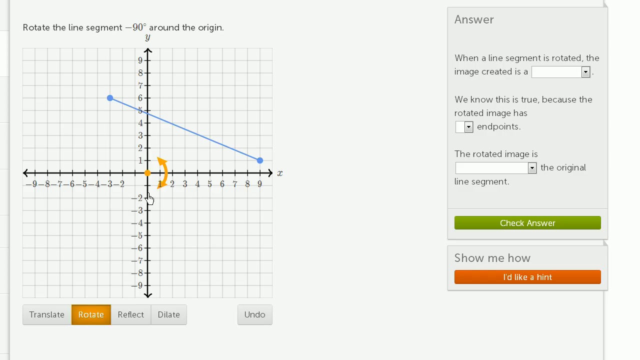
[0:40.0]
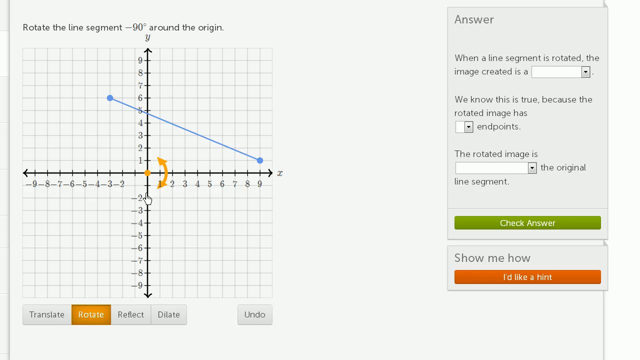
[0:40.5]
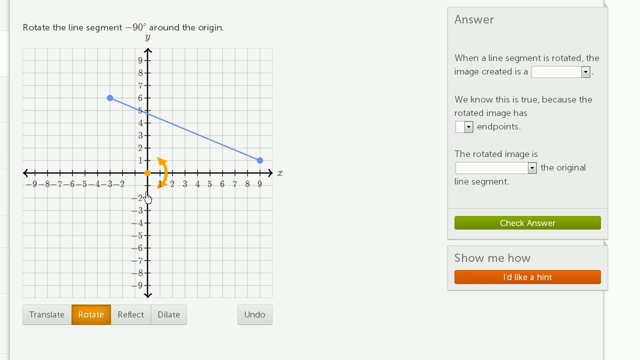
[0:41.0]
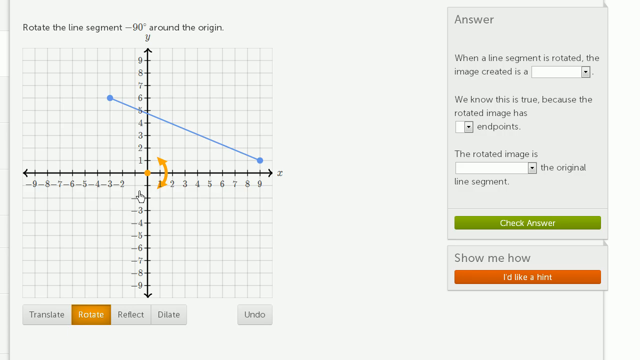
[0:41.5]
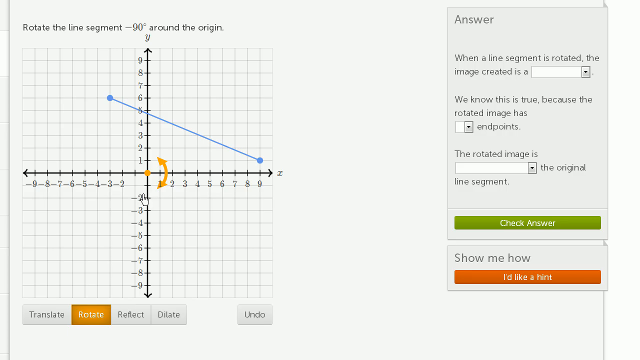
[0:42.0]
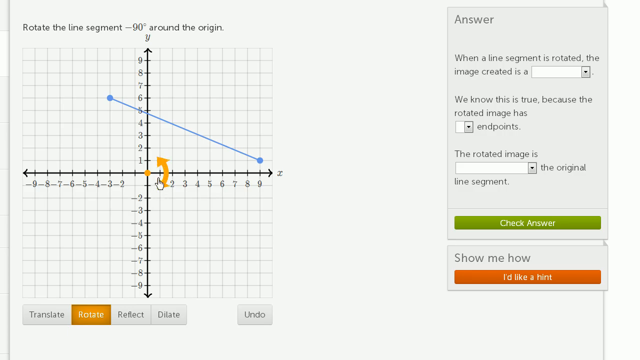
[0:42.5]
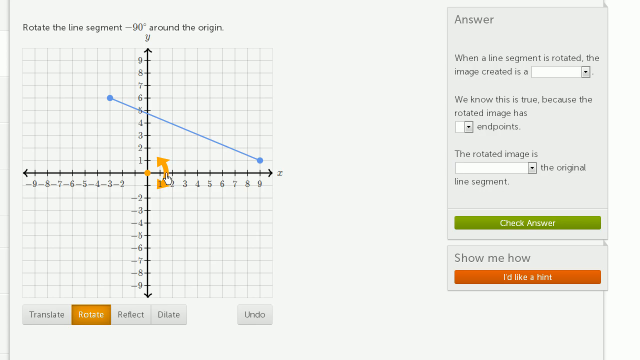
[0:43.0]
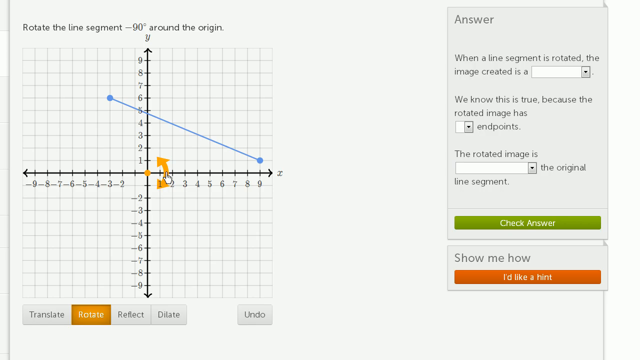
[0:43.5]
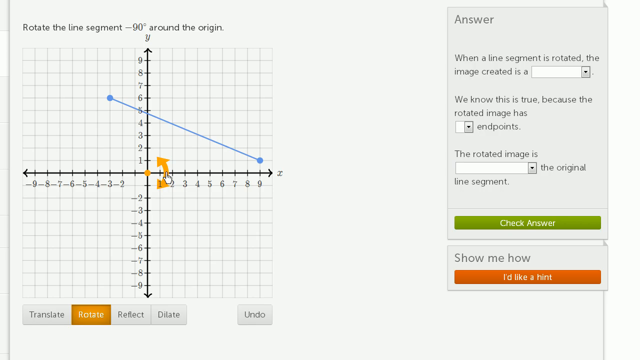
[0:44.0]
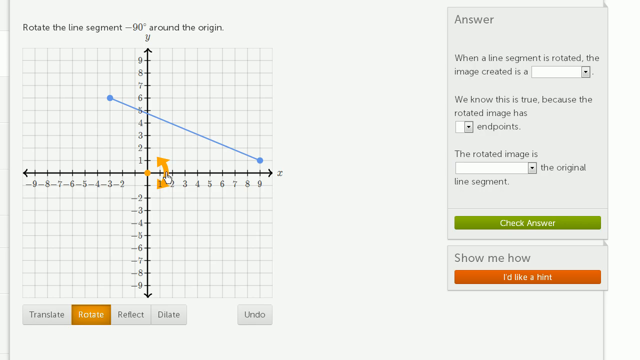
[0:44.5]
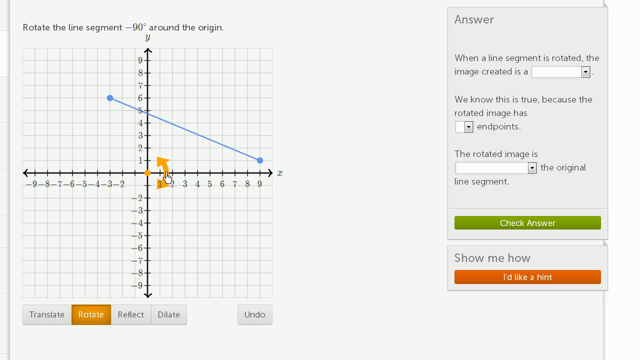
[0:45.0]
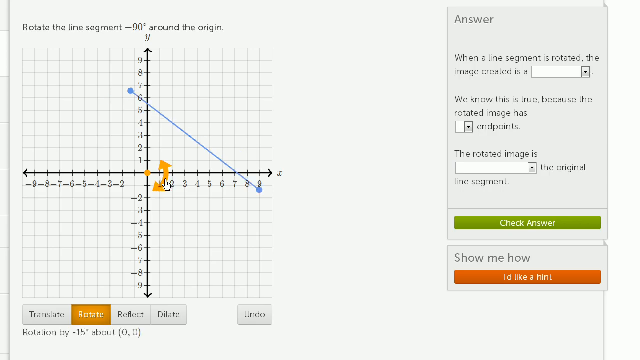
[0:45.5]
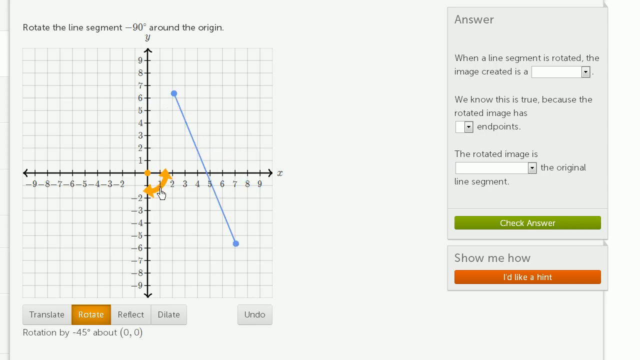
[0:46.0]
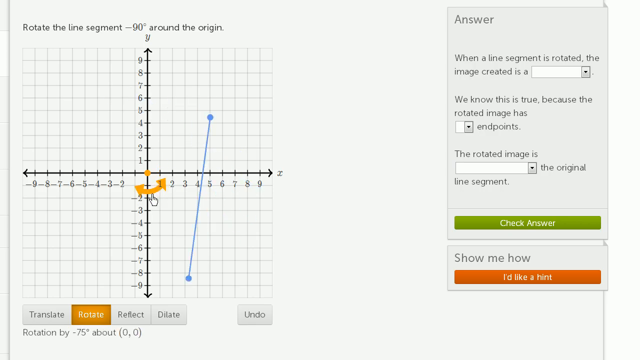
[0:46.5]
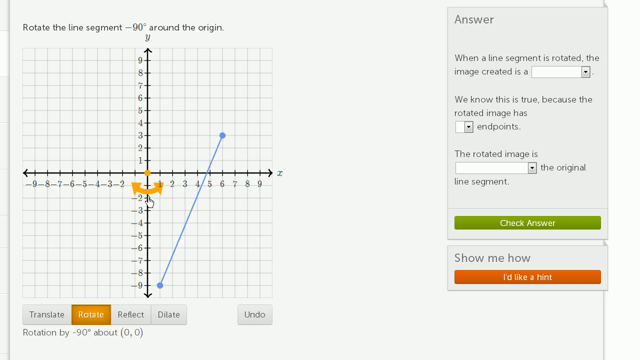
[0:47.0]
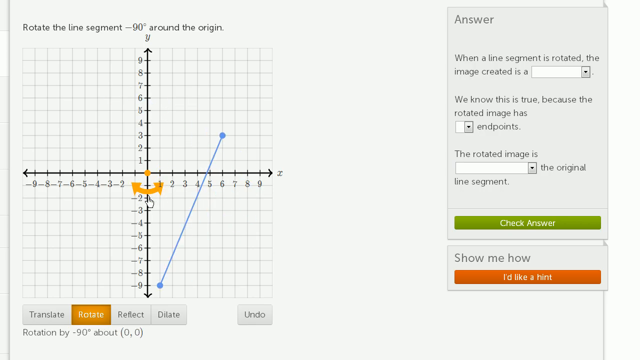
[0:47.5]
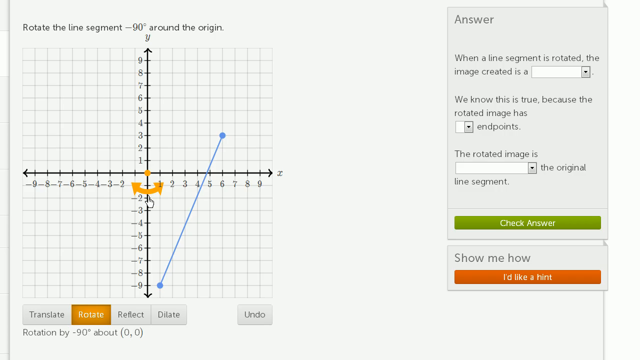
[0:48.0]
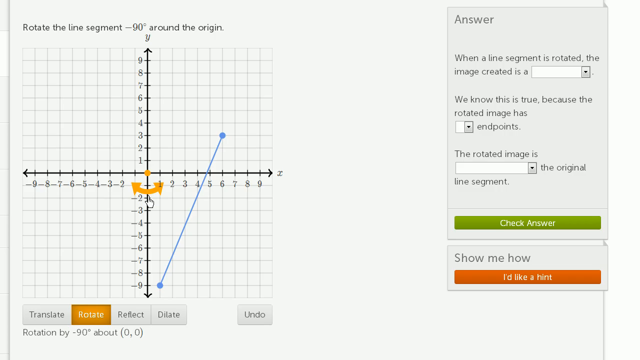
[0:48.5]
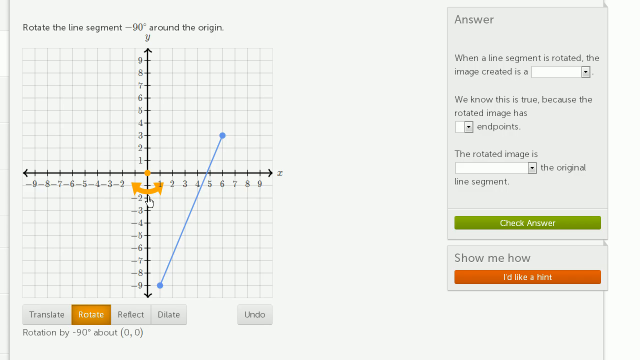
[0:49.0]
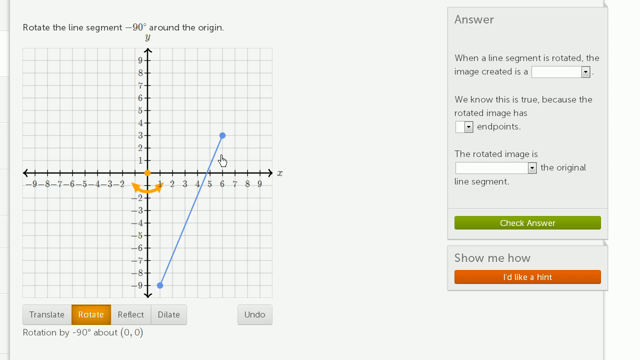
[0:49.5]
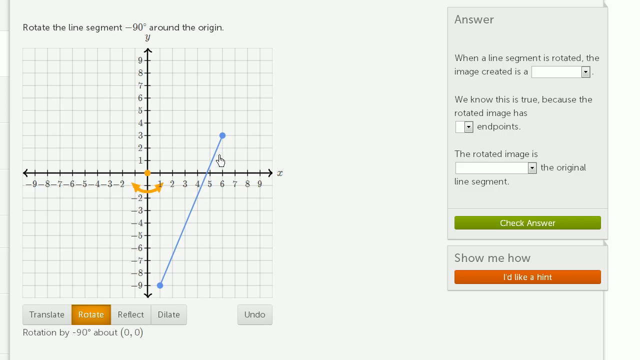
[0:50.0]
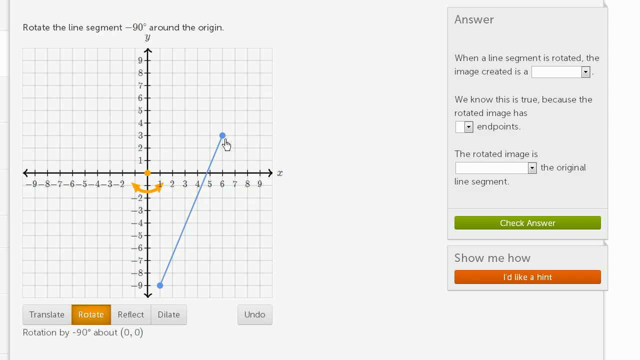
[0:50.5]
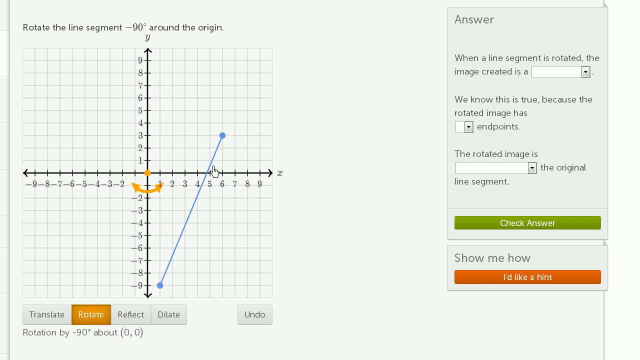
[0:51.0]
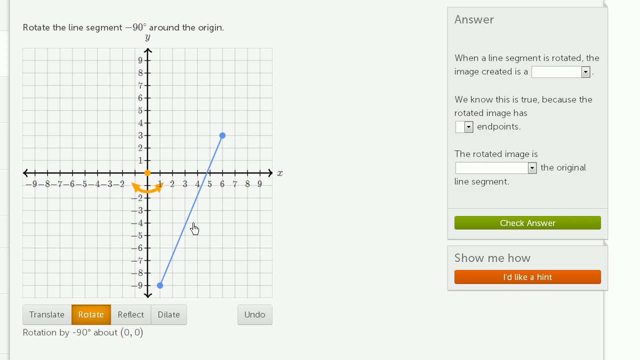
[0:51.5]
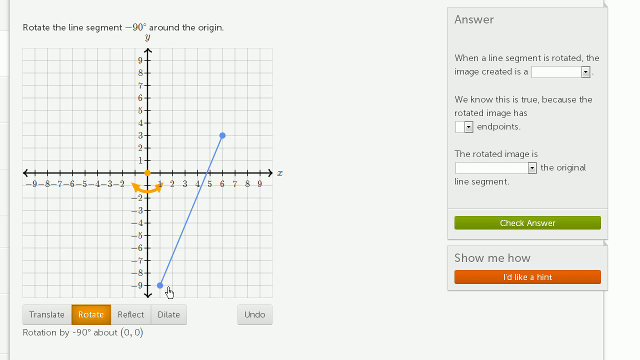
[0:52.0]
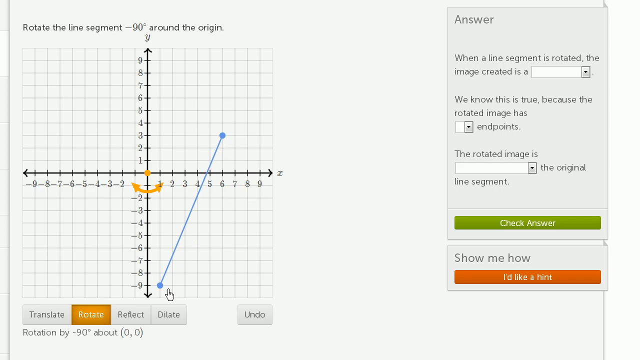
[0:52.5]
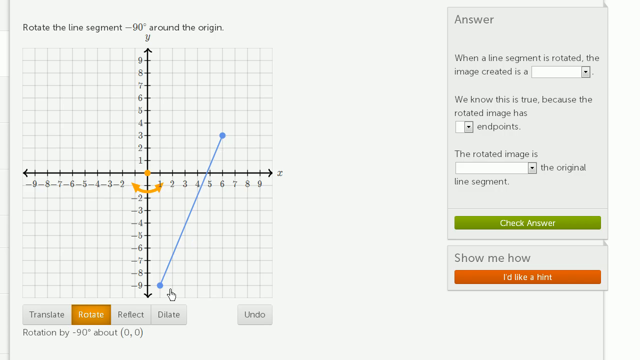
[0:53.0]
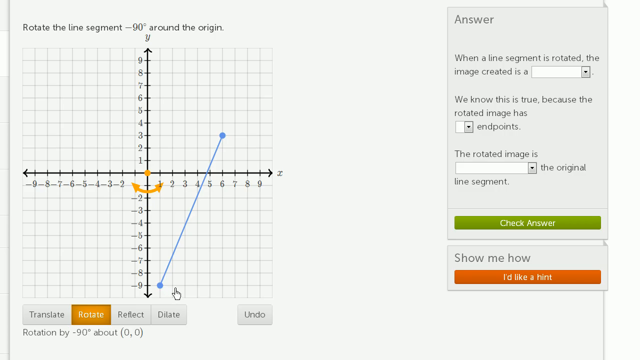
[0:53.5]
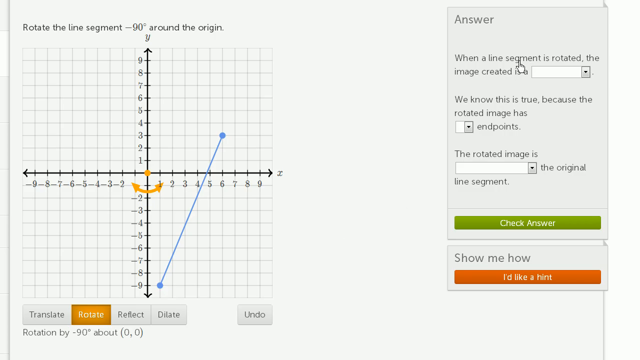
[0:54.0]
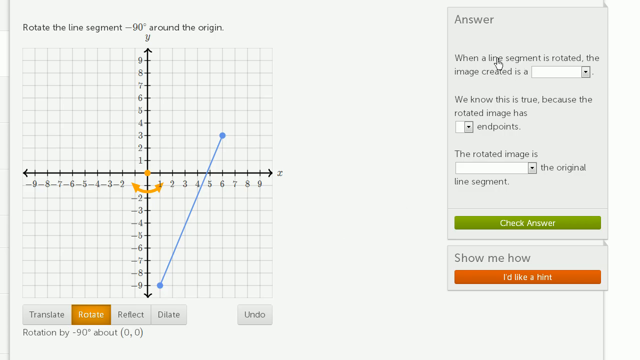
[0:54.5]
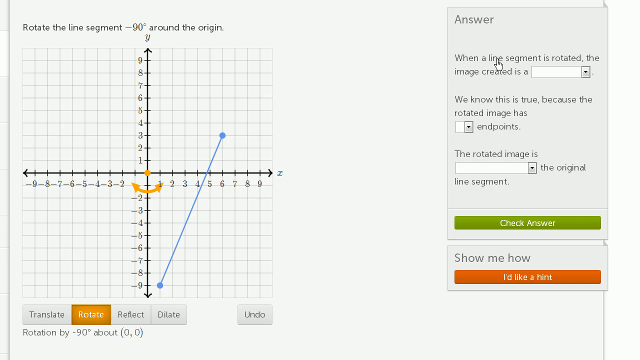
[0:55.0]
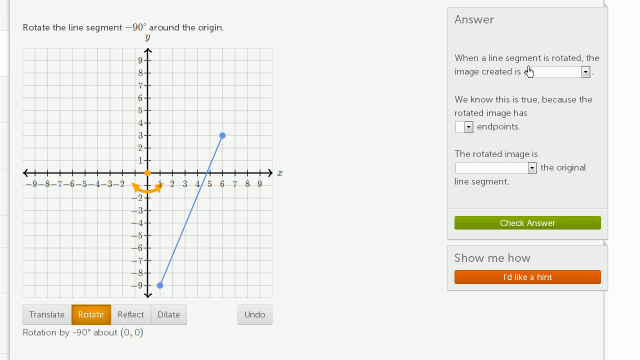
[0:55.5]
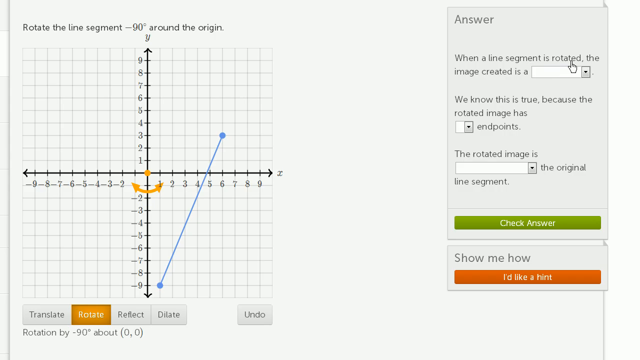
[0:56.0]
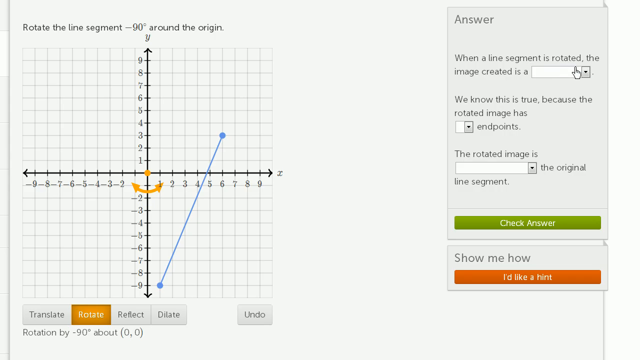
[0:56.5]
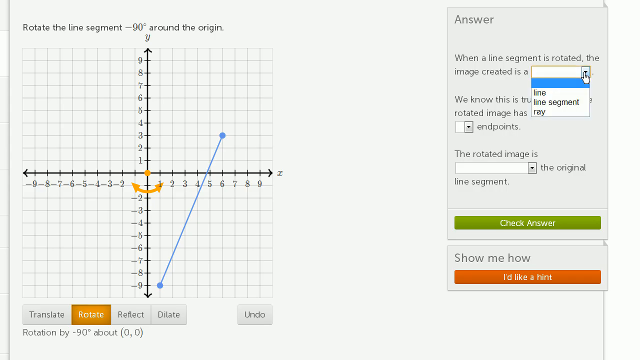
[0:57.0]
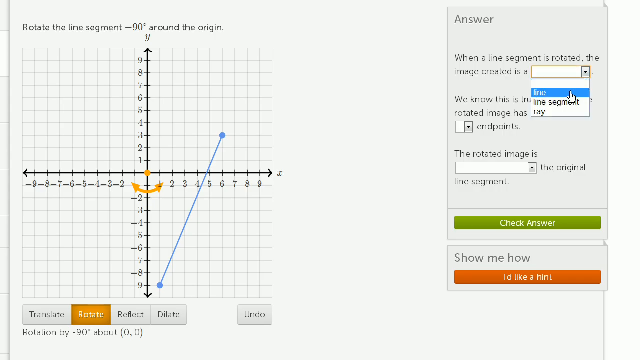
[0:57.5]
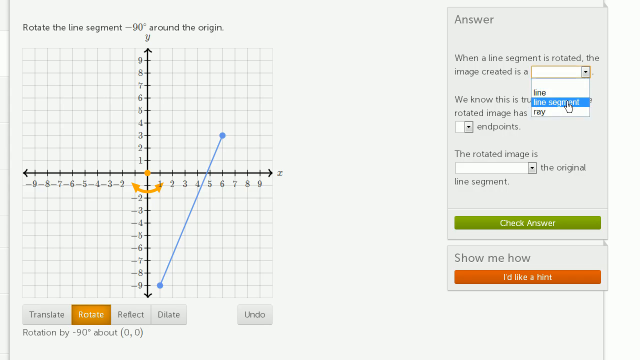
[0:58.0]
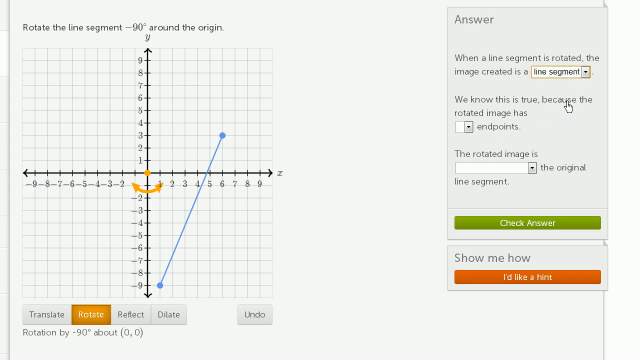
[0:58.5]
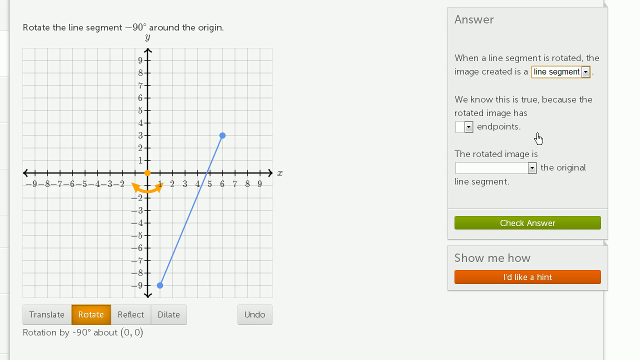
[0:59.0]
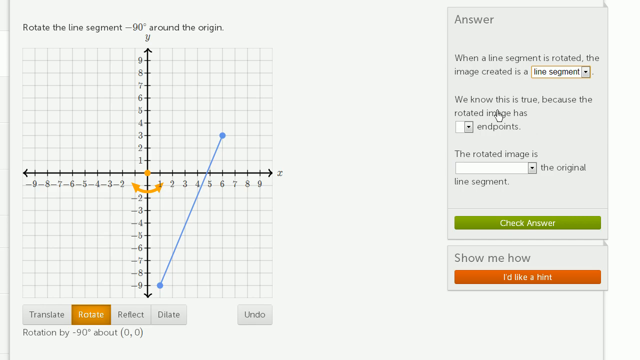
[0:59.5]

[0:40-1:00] The rotate option is active with a dot at the center of the coordinate system, and the person rotates the segment using the arrows, producing a new line with one point at (1, -9) and the other at (6, 3). The person then goes to the answer table to fill in the sentences. For "when a line segment is rotated the image created is a," there are three options: line, line segment and ray. The person chooses line segment.